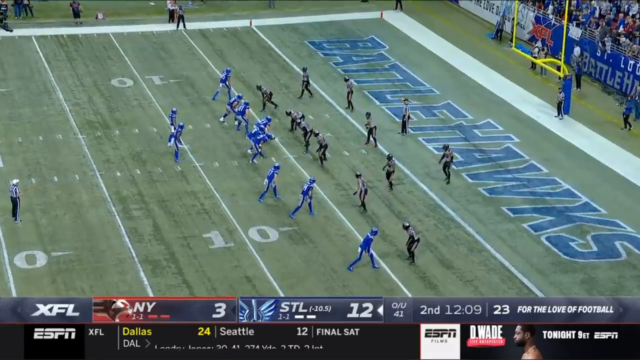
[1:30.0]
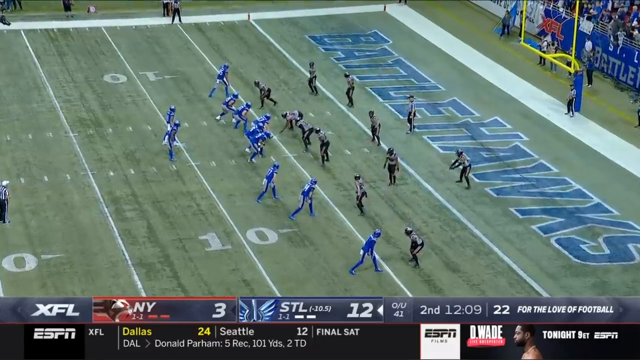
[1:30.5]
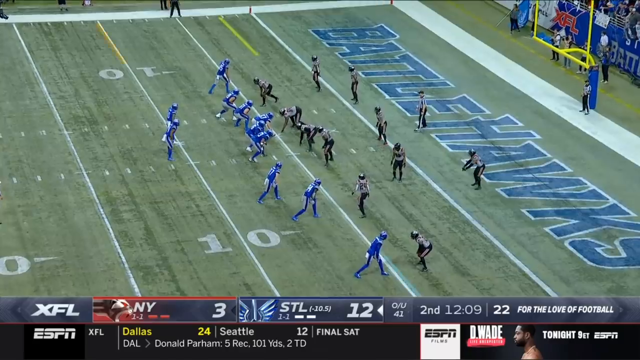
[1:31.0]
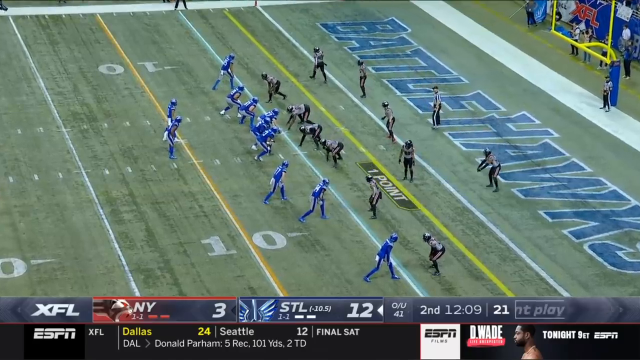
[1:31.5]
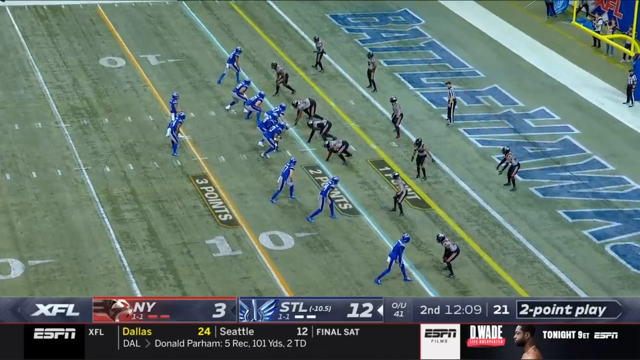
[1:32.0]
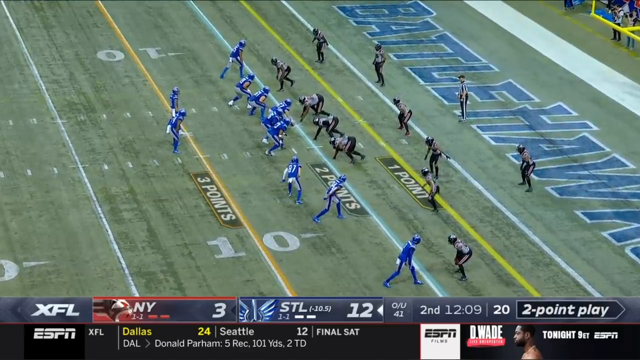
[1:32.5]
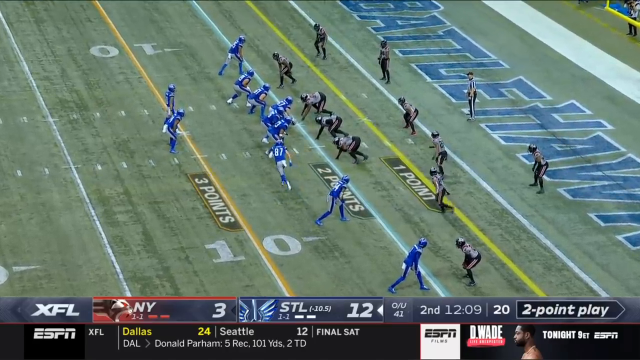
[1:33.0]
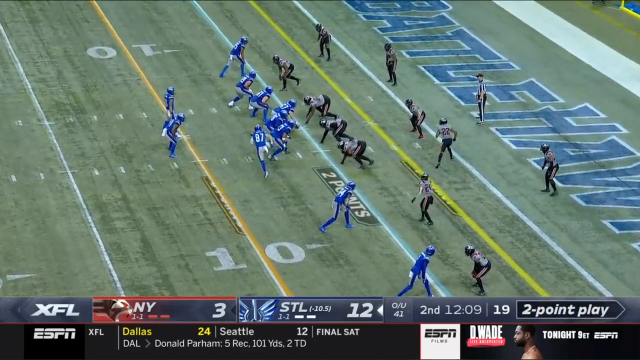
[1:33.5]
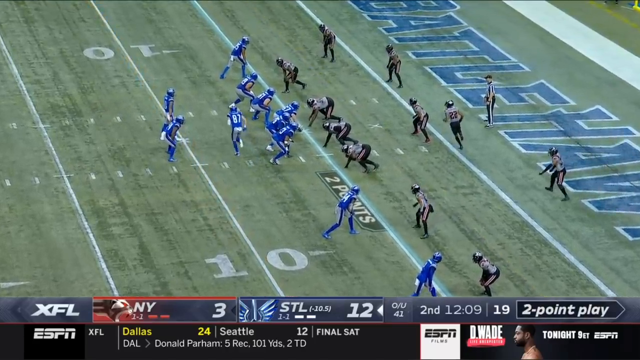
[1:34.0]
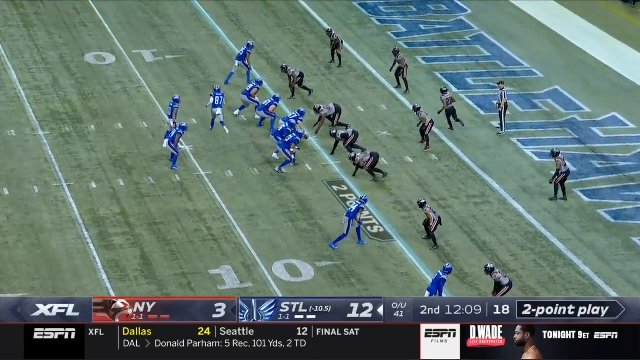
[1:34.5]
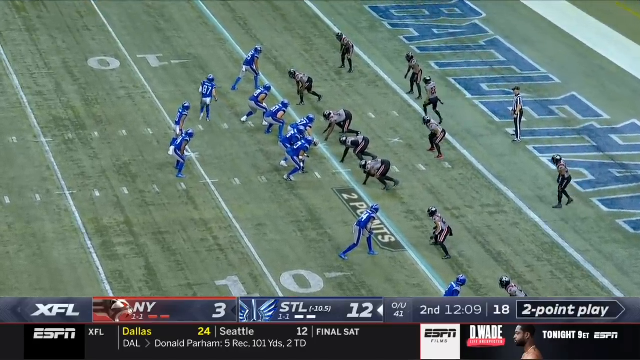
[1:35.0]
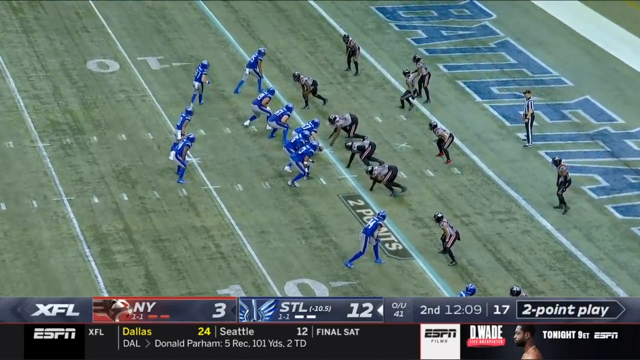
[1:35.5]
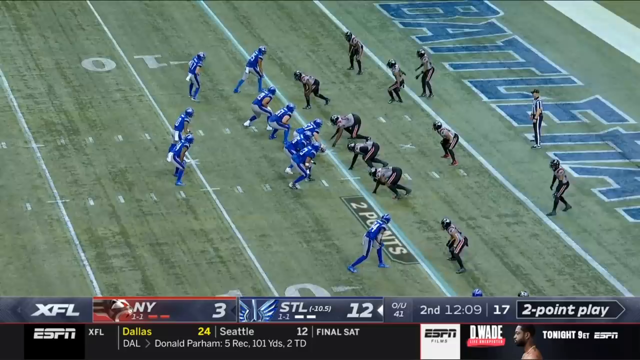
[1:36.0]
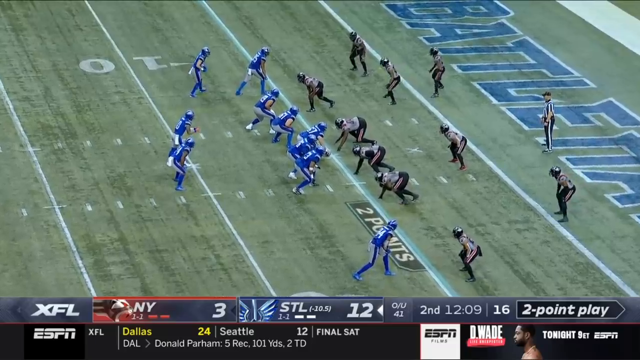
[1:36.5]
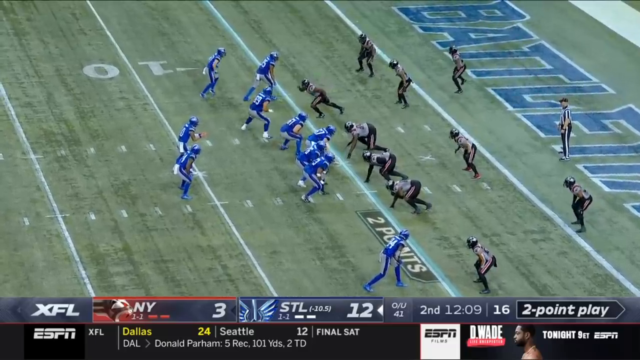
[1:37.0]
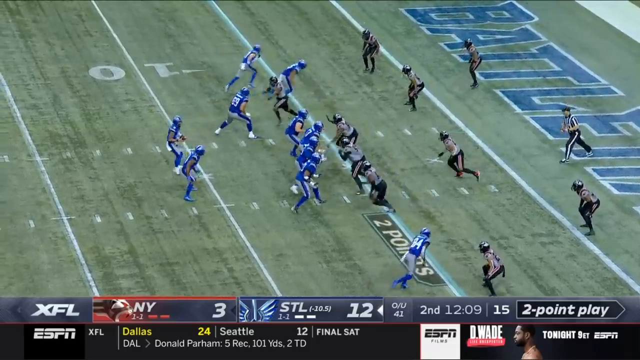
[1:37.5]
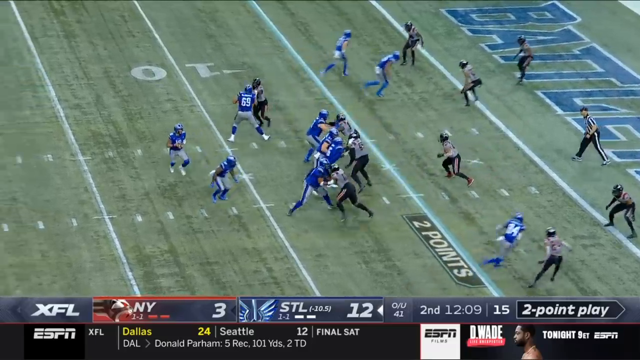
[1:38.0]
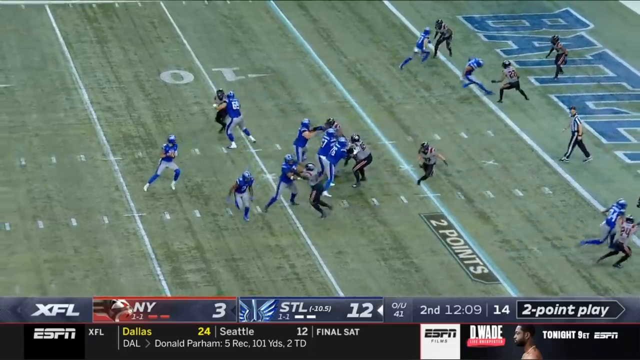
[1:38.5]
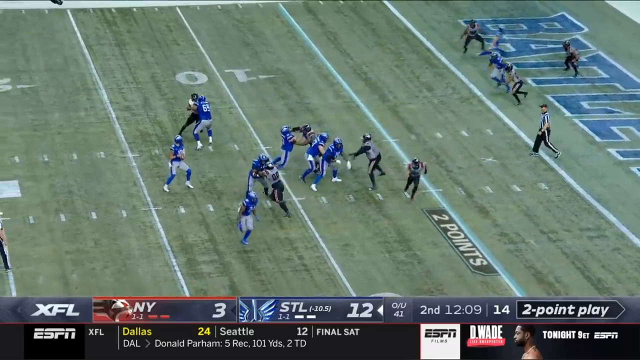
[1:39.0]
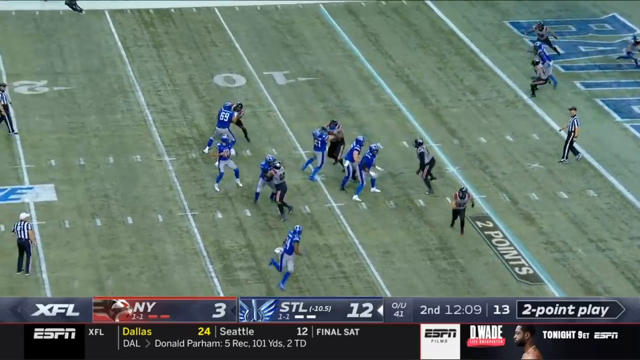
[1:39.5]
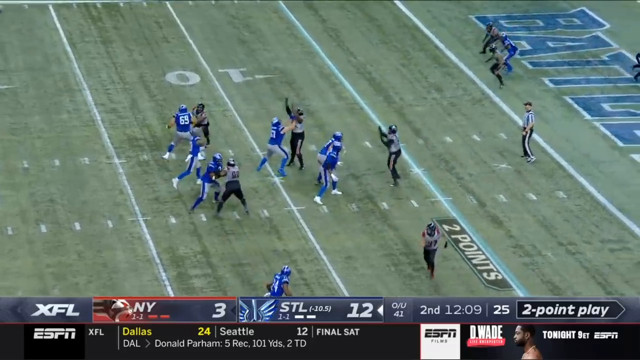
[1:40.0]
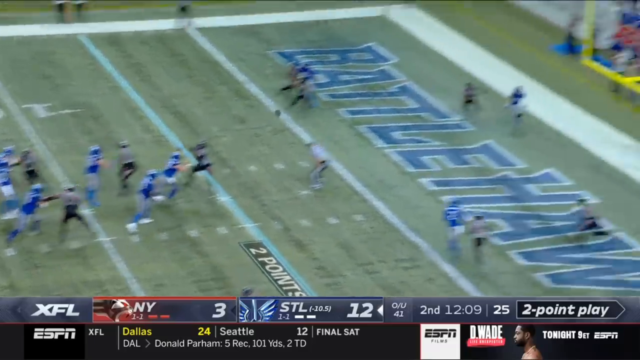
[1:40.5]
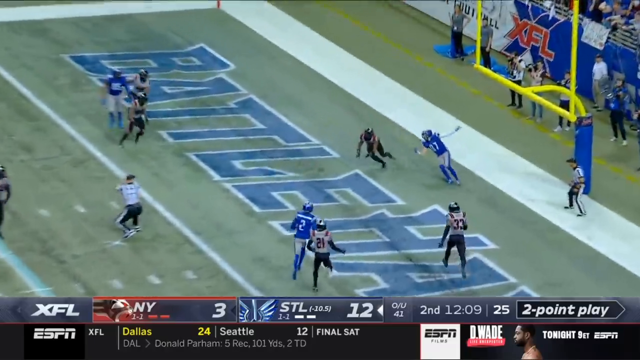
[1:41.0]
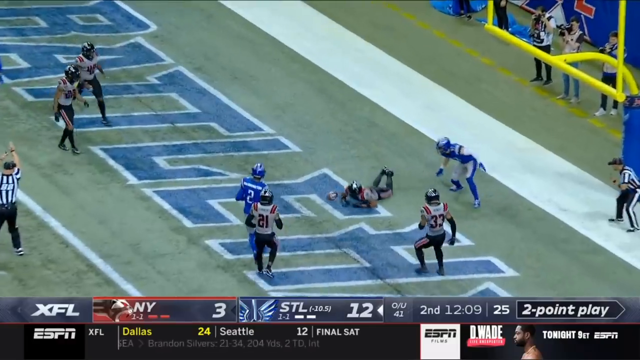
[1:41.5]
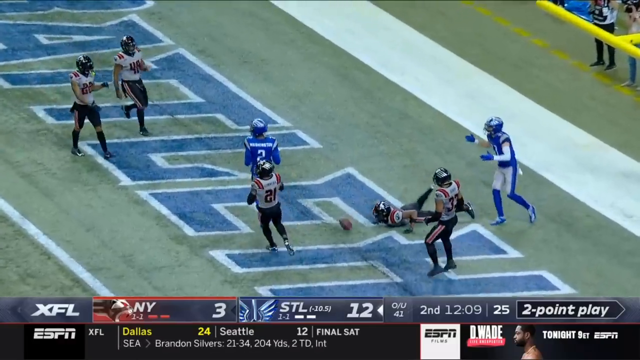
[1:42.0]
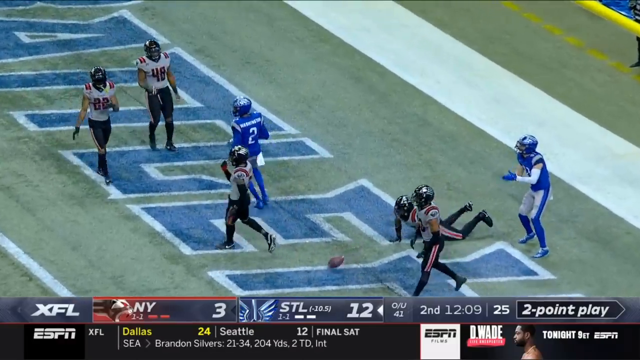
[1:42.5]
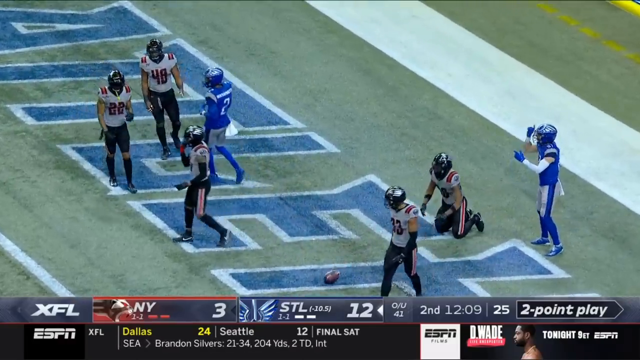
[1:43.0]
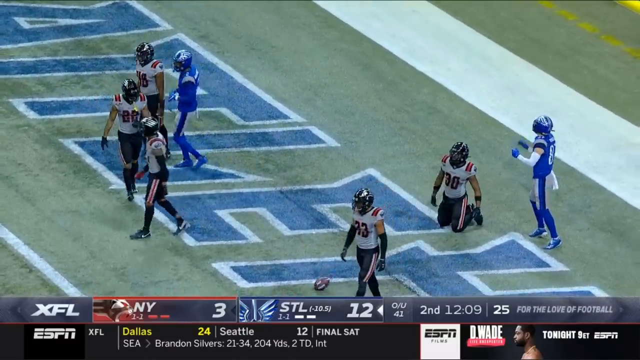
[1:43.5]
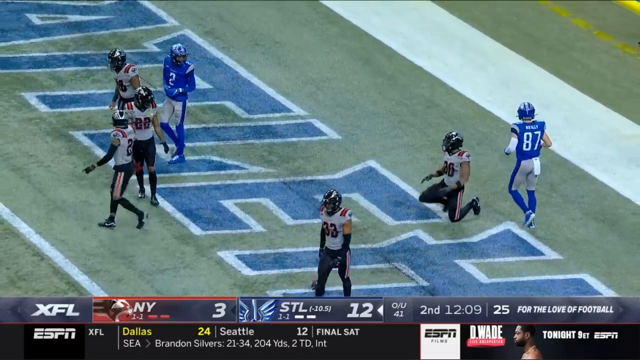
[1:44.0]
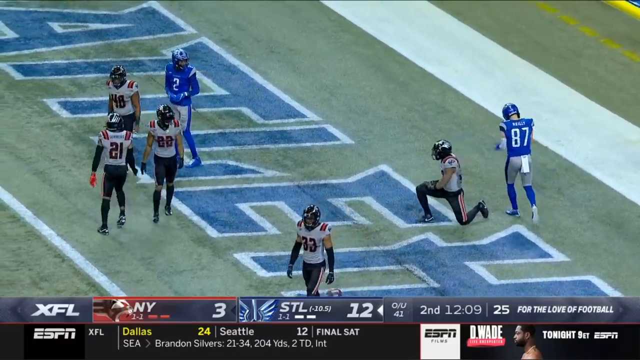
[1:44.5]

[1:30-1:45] A football game opens with the team in black, white and red kicking off to a team that looks like the Battle Hawks, in blue and white jerseys. One player catches the ball and throws it to another, who runs for a touchdown and scores. The fans cheer, the players cheer and jump all over each other, and fans in hawk outfits cheer in the stands. A sportscaster is shown in the box at the top of the stands, and a split screen shows the referee in a red and white striped shirt with the number 81 on it, talking and pointing before throwing his arm down. The team goes for extra points and misses. The player who scored, wearing jersey number 44, is interviewed by a lady from ESPN. "XFL ESPN" comes on the screen, then a replay of the touchdown goes into slow motion, ending the video.